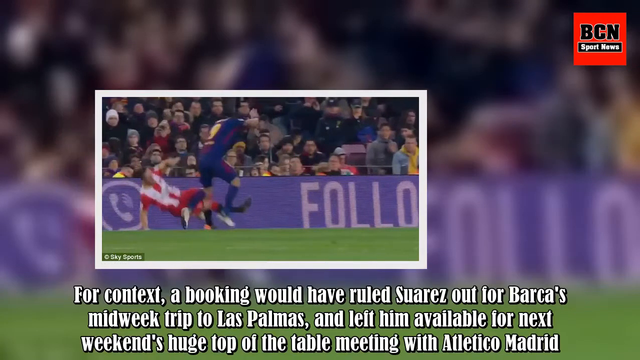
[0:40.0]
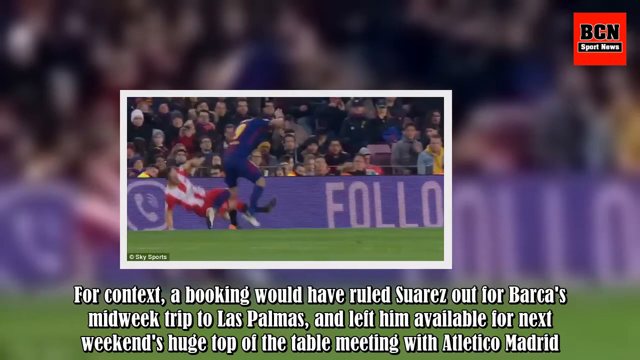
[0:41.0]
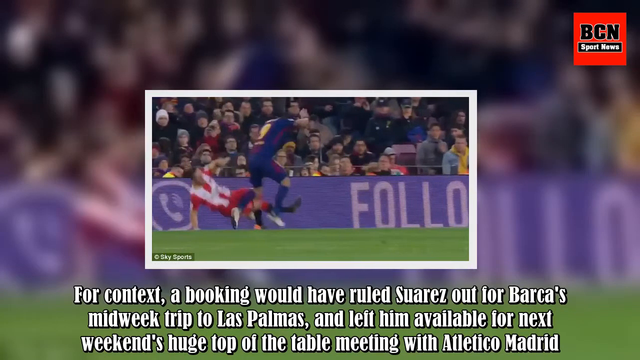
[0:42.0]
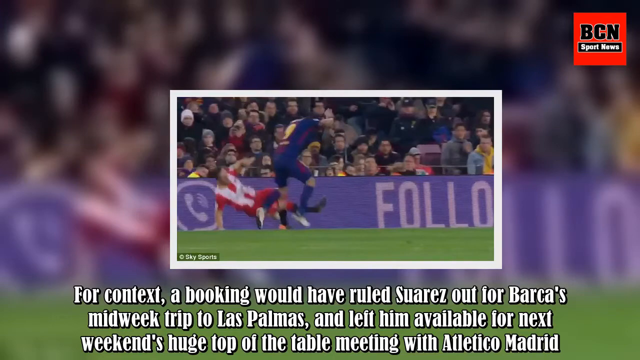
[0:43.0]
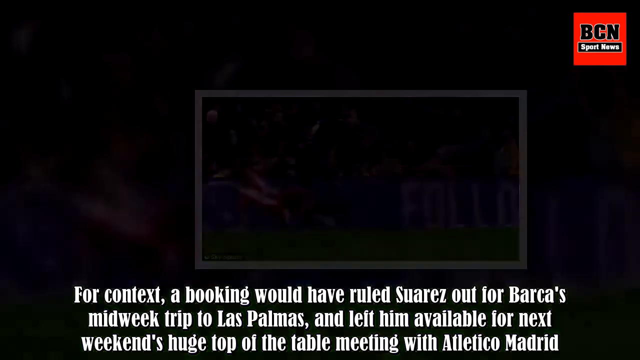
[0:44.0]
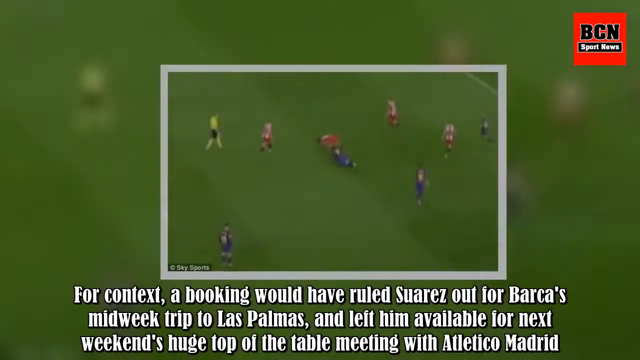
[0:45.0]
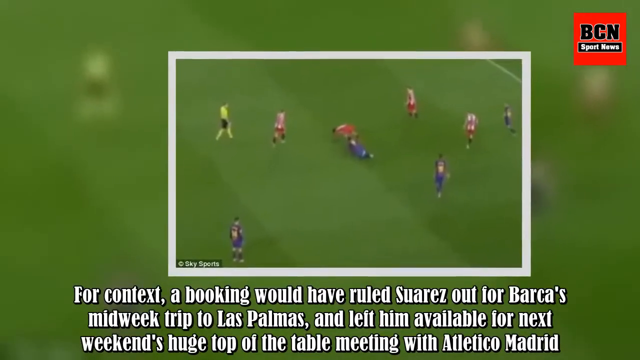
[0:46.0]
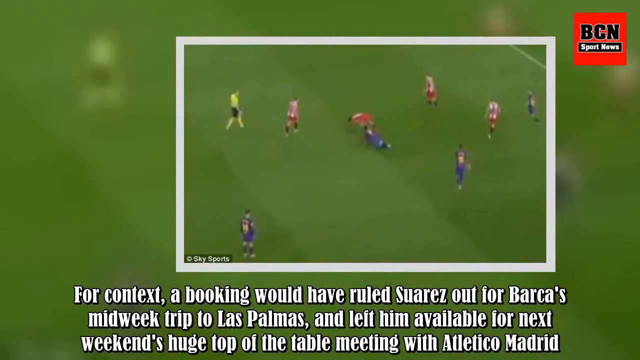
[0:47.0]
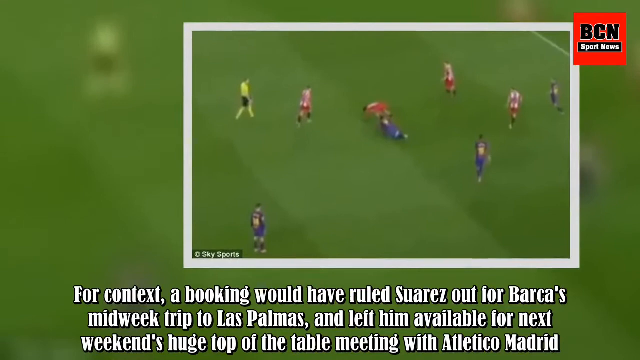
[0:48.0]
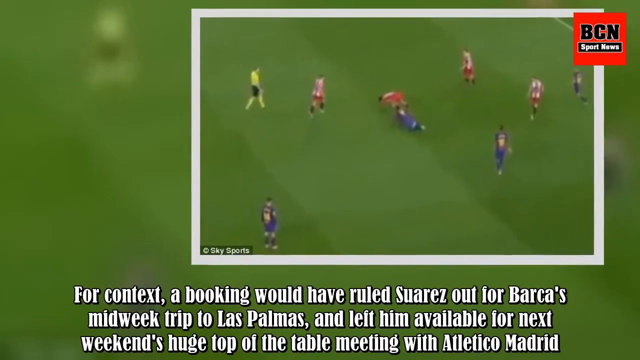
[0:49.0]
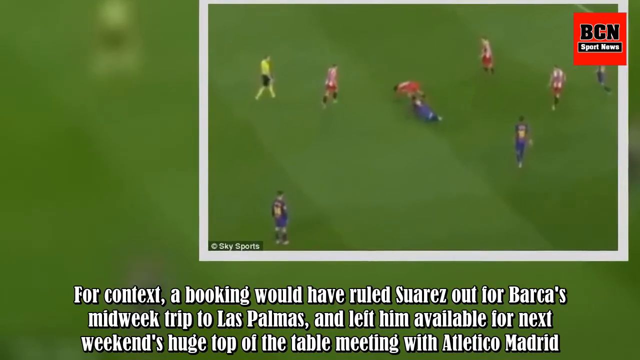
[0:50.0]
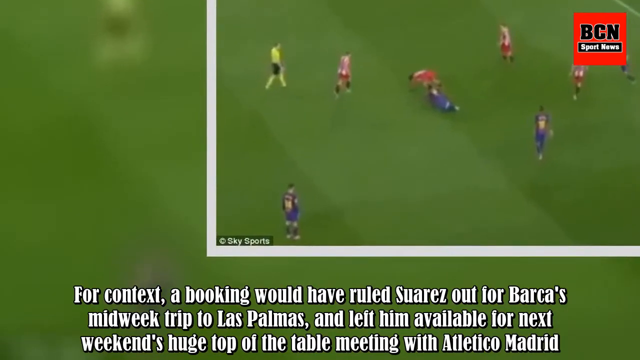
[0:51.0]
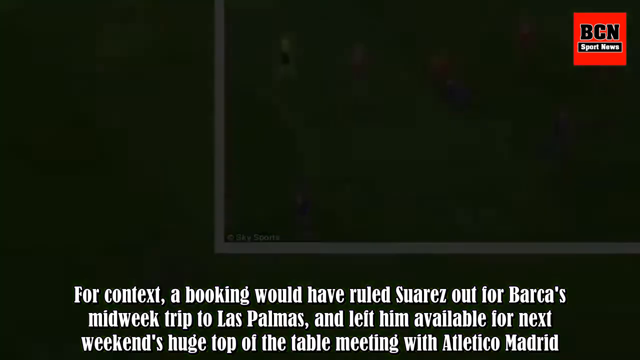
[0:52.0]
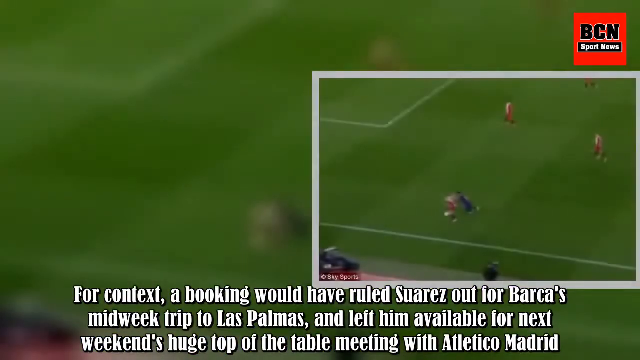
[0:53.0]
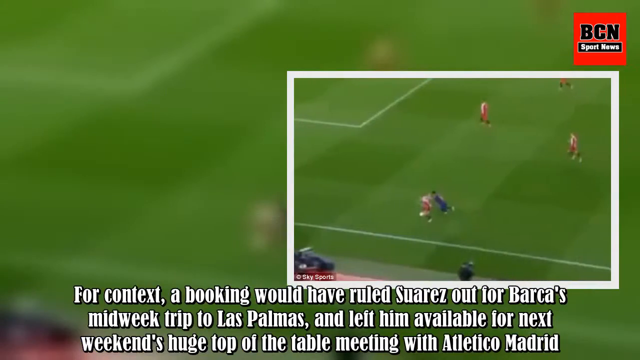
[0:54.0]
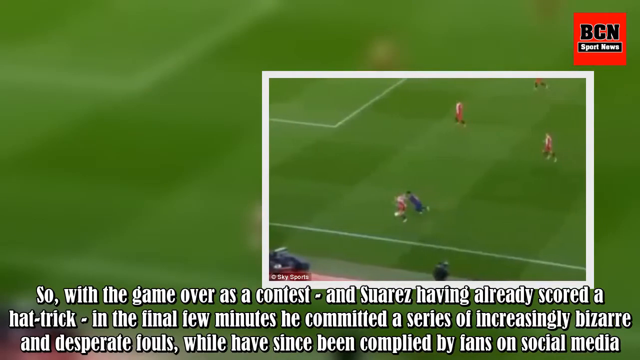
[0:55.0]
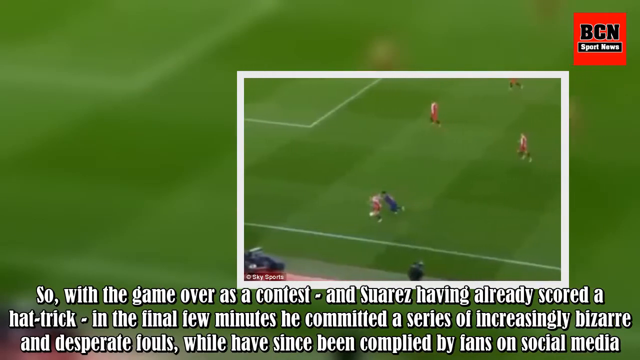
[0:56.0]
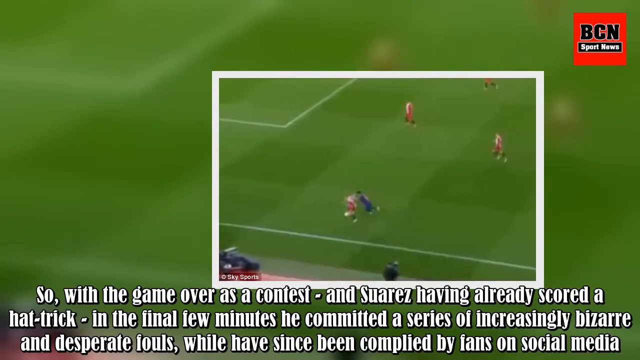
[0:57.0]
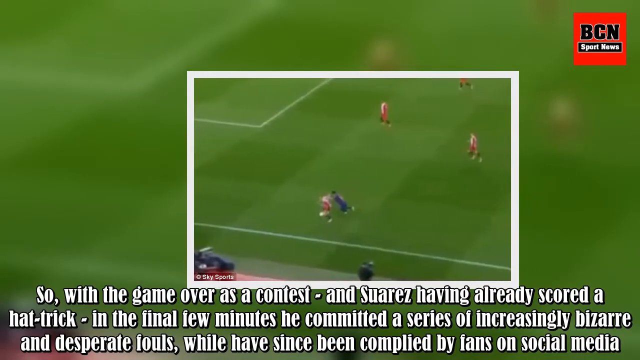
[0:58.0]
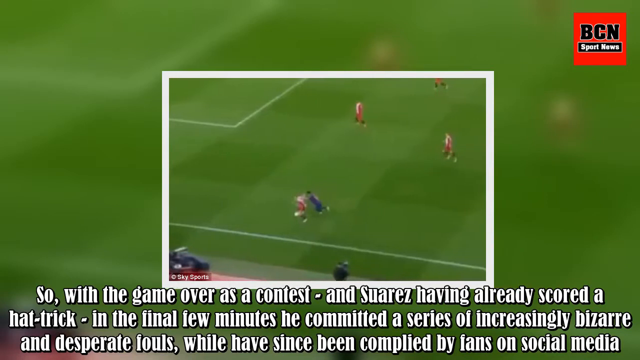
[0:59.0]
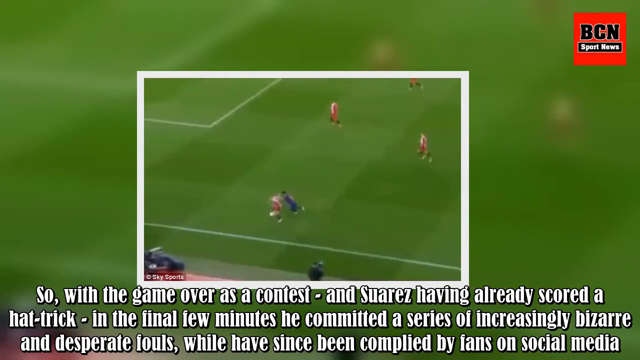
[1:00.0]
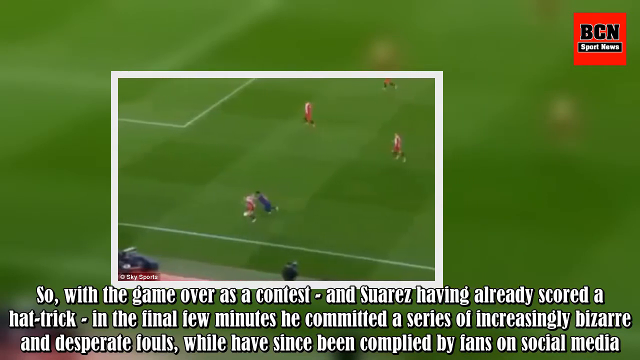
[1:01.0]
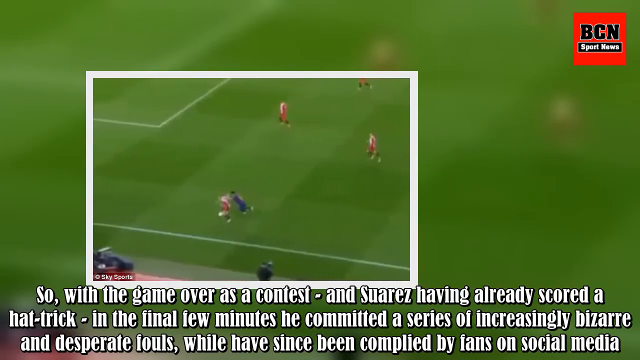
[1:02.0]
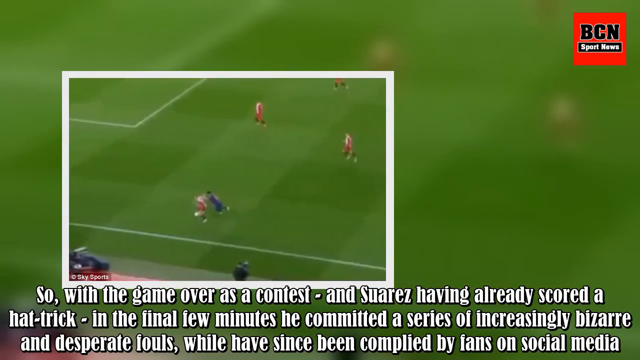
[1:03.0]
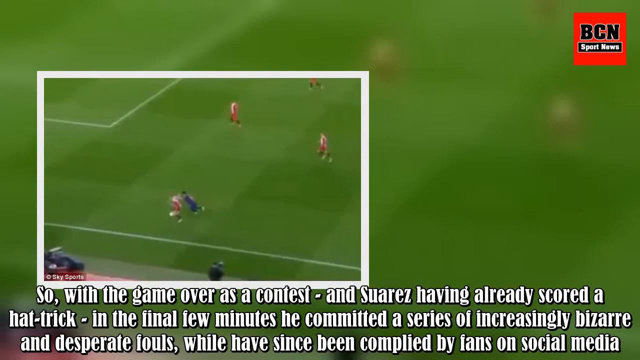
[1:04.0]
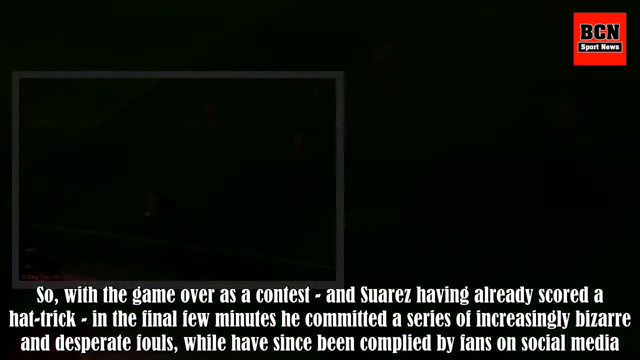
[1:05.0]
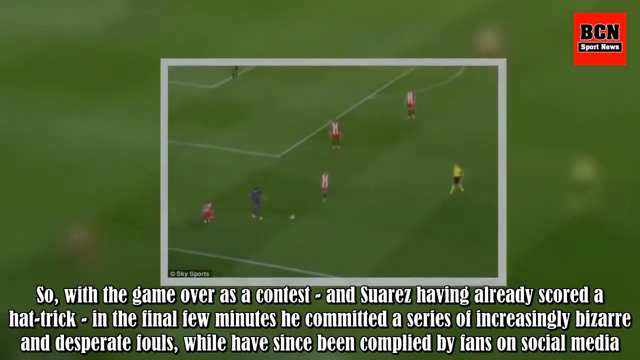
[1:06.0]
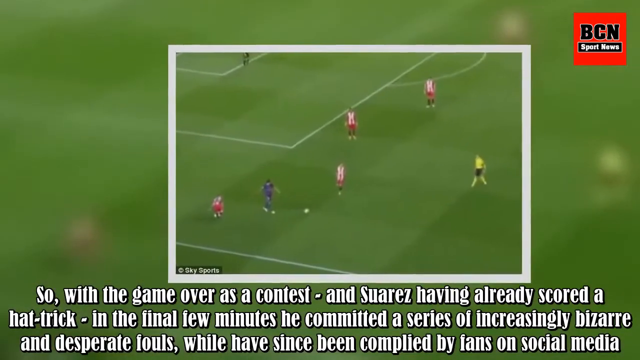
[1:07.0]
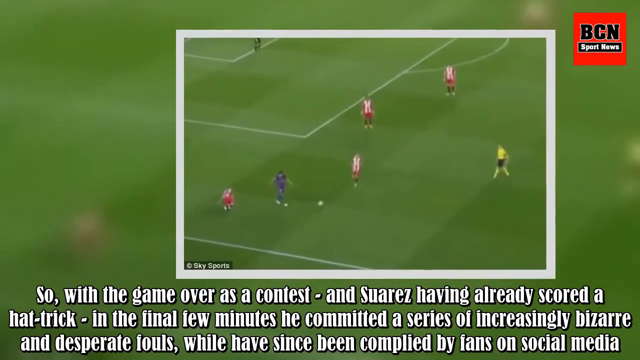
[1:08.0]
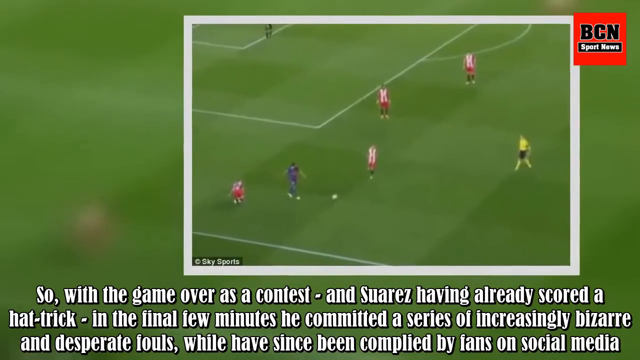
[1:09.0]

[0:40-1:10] An image of a soccer game shows two men tripping over each other. They appear to be at a live sporting event in an arena, with people in the stands spectating and watching the game. Text at the bottom reads "for context, a booking would have ruled Suarez out for Barca's mid-week trip to Las Palmas and left them available for next weekend's huge top-of-the-table meeting with Atletico, Madrid." Images and pictures from the game continue, potentially showing what happened between two players and what led to the situation. Text at the bottom of the screen then reads "so with the game over as a contest and Suarez having already scored a hat trick in the final few minutes he committed a series of increasingly bizarre and desperate fouls," continuing with "have since been compiled by fans on social media." The pictures are presumably of the fouls compiled by fans.